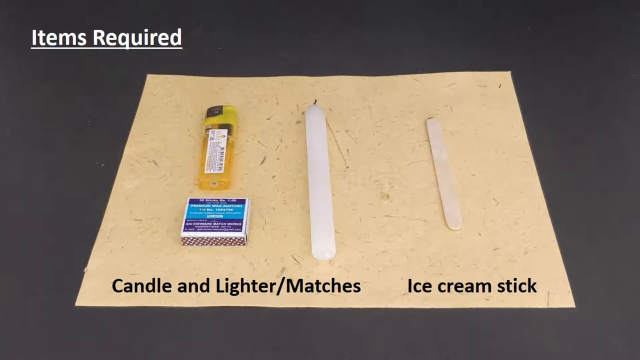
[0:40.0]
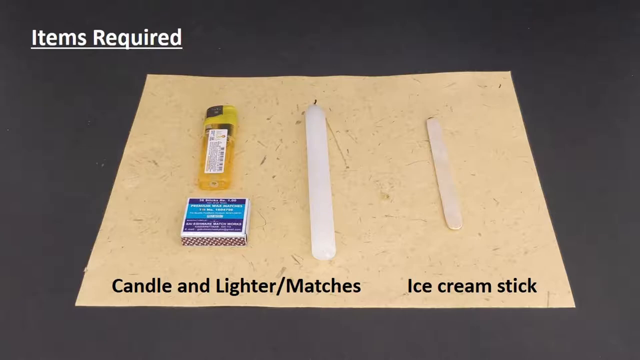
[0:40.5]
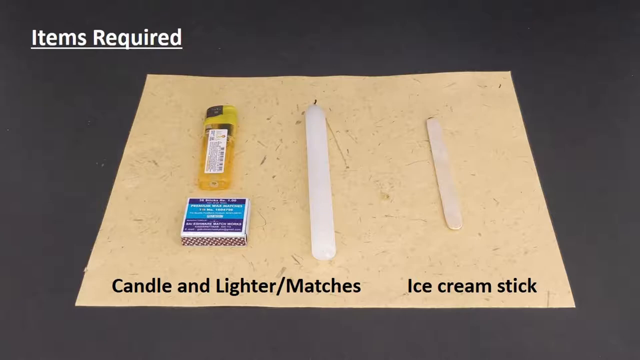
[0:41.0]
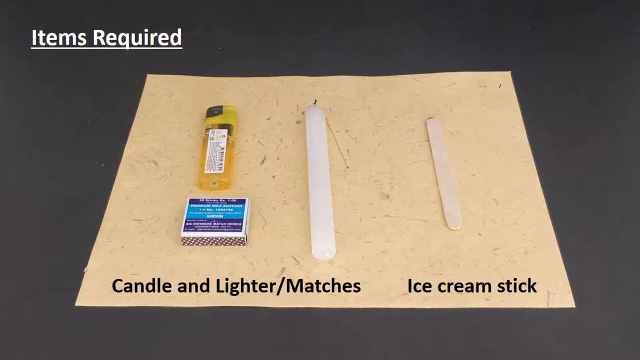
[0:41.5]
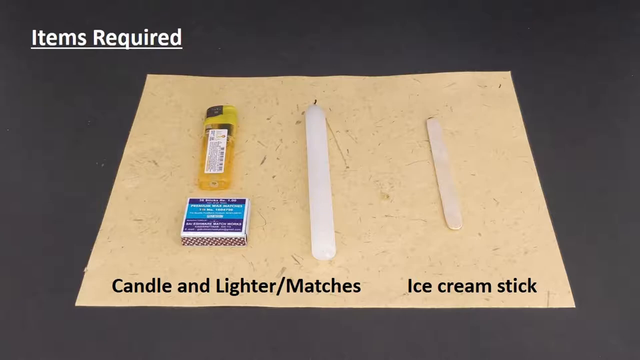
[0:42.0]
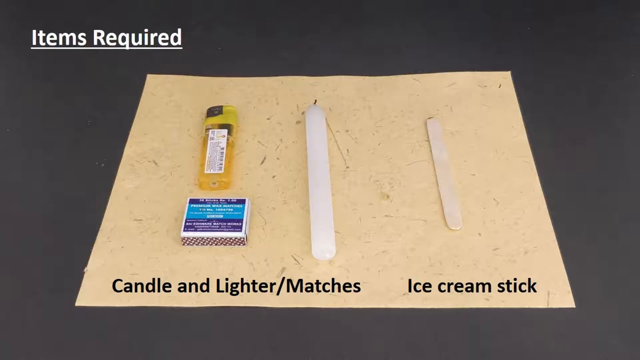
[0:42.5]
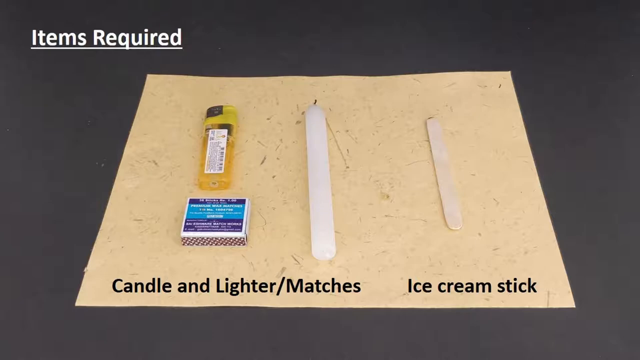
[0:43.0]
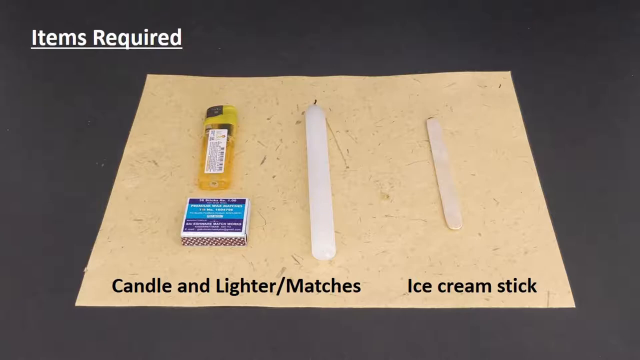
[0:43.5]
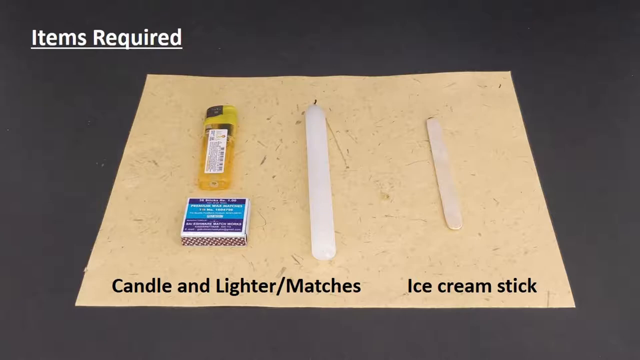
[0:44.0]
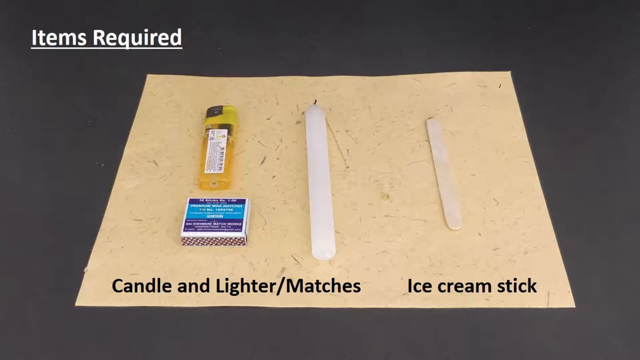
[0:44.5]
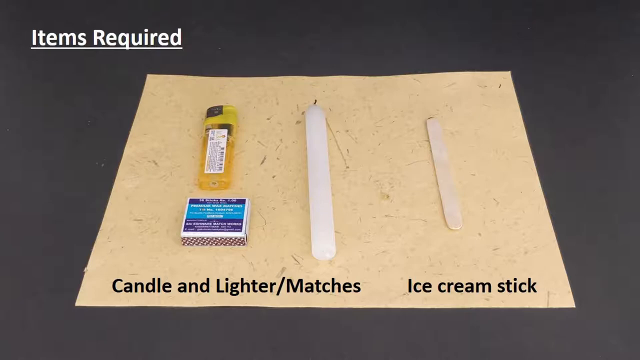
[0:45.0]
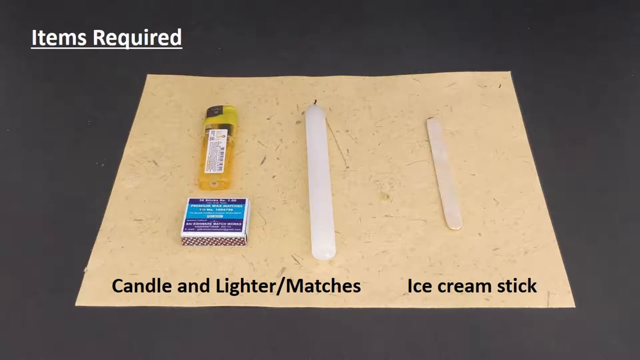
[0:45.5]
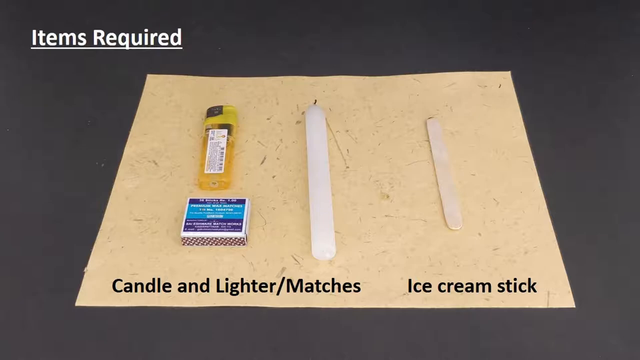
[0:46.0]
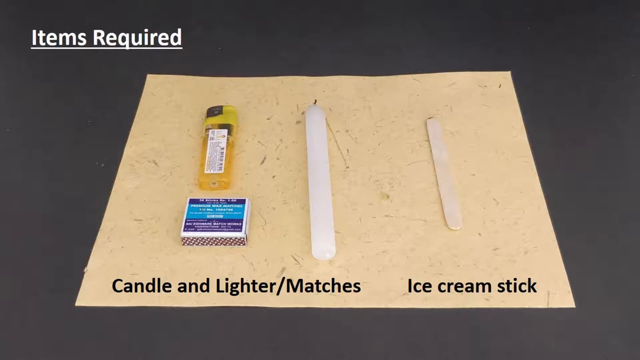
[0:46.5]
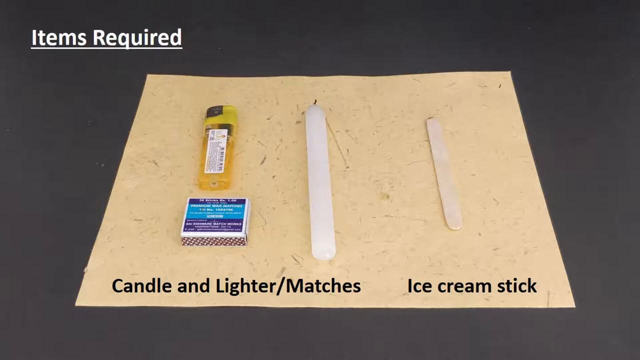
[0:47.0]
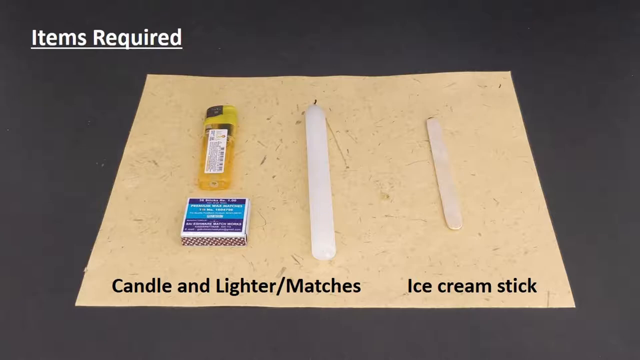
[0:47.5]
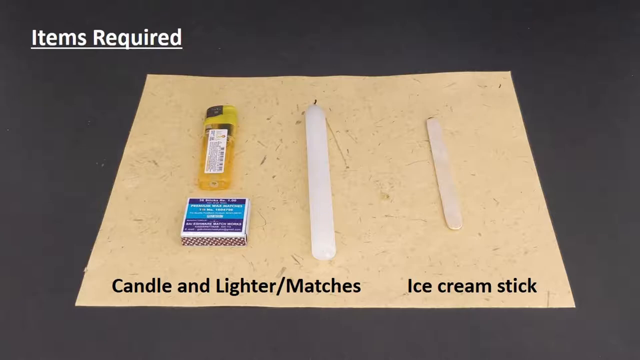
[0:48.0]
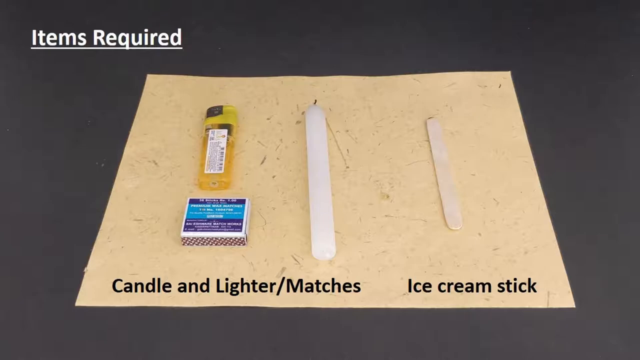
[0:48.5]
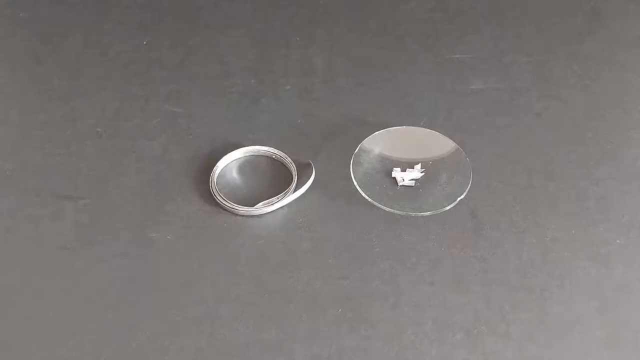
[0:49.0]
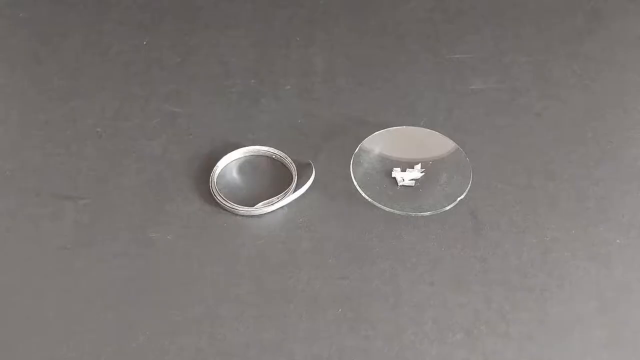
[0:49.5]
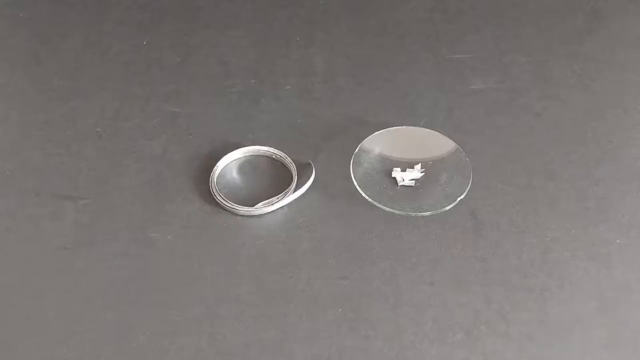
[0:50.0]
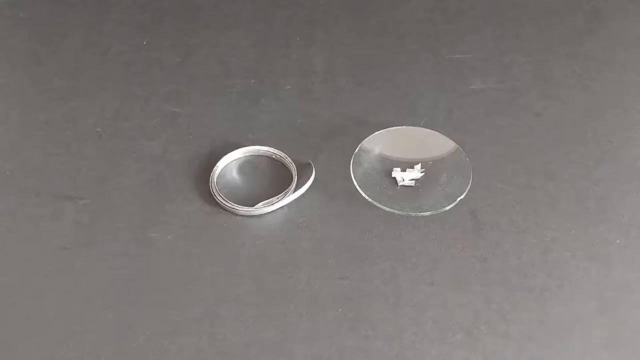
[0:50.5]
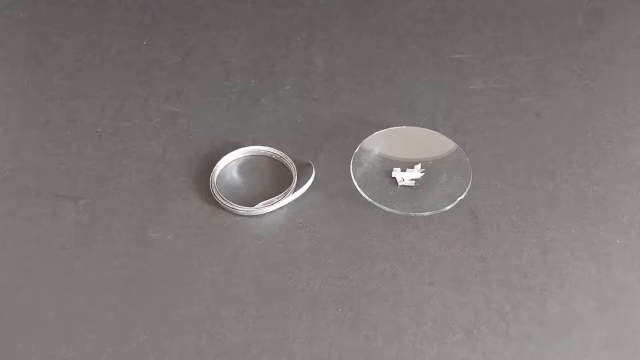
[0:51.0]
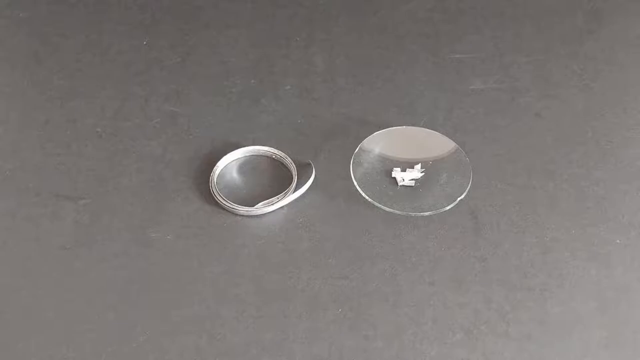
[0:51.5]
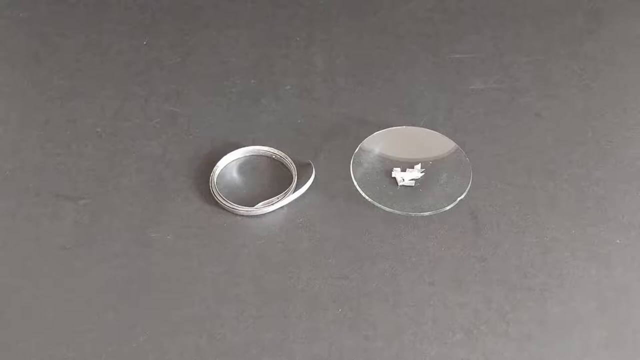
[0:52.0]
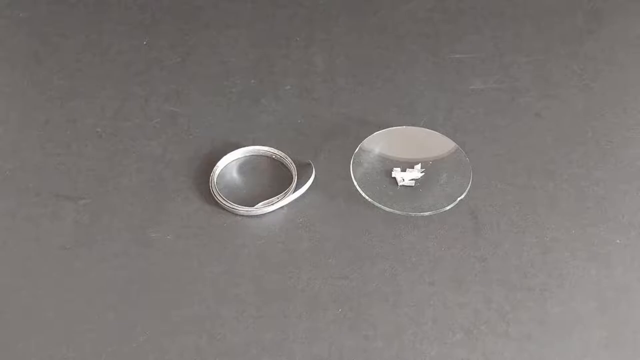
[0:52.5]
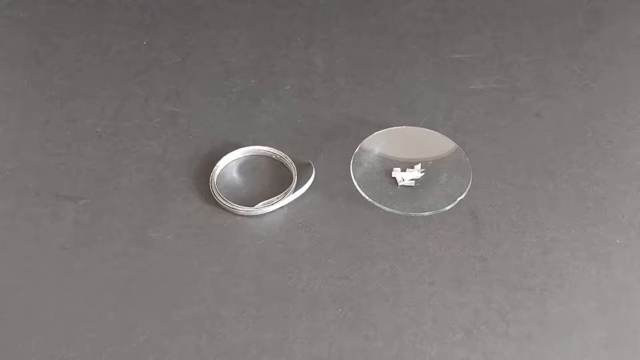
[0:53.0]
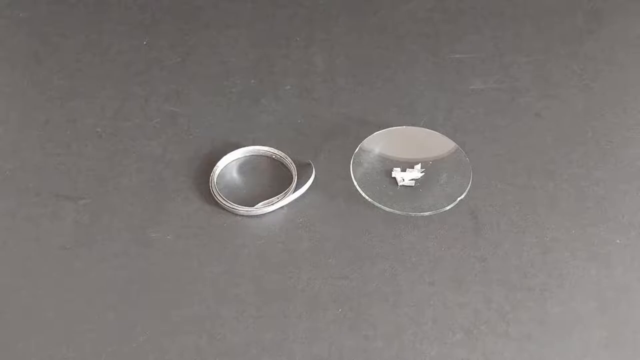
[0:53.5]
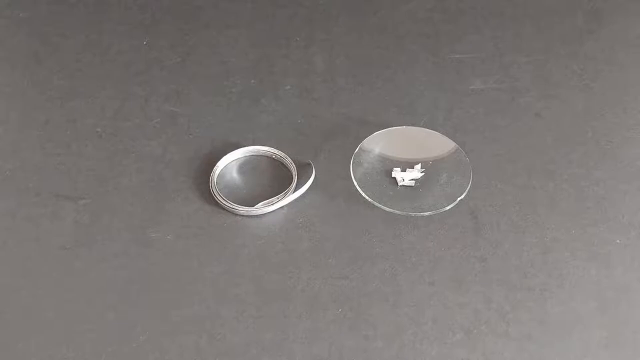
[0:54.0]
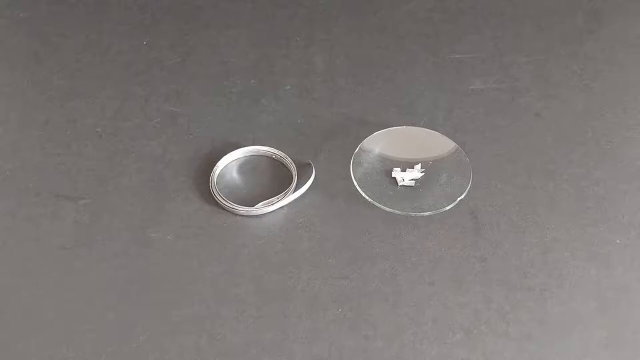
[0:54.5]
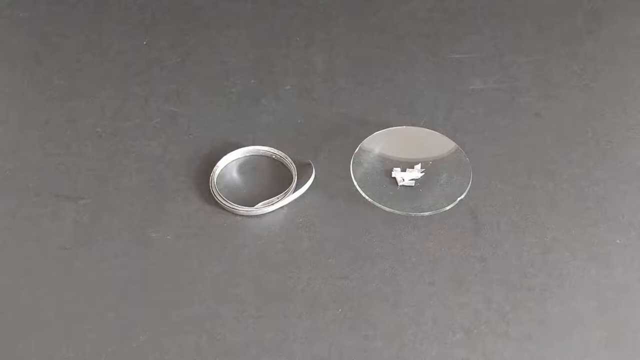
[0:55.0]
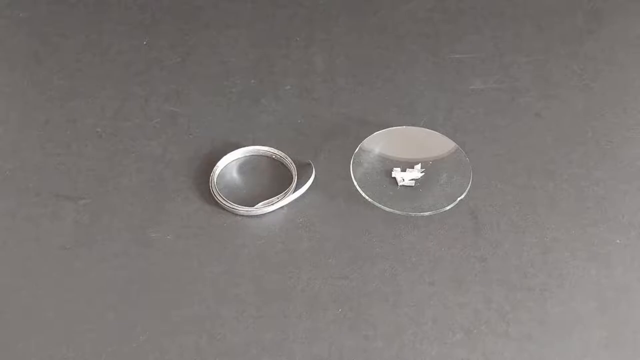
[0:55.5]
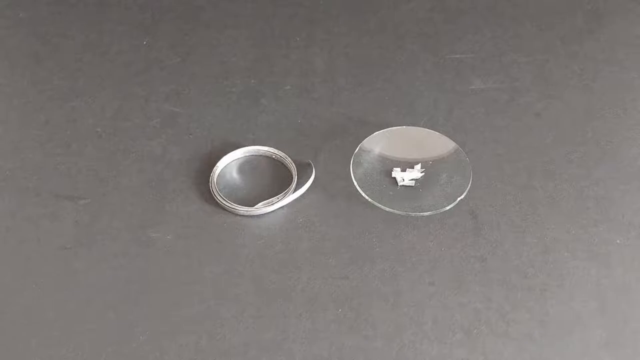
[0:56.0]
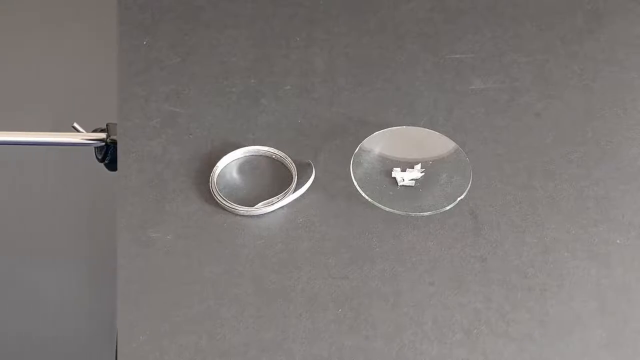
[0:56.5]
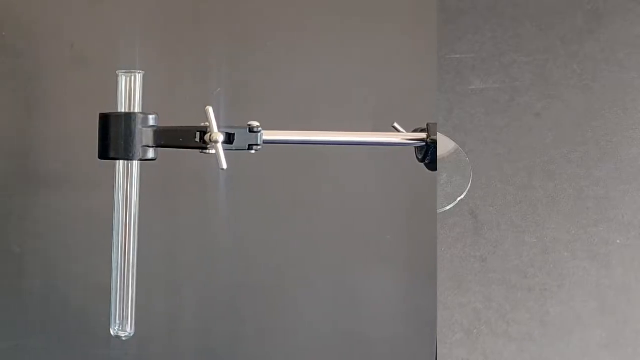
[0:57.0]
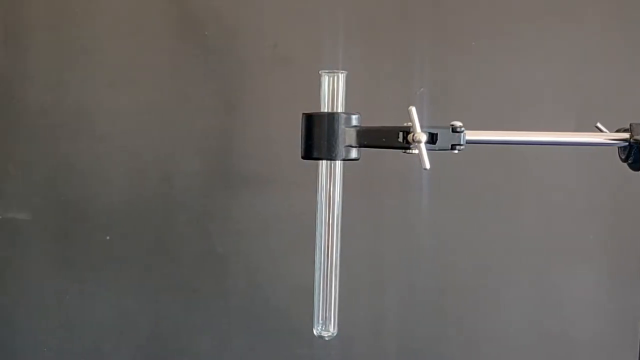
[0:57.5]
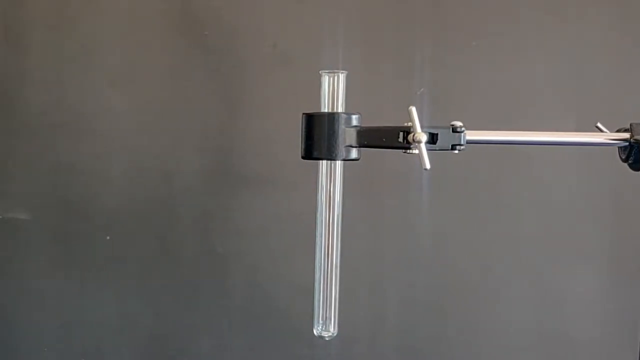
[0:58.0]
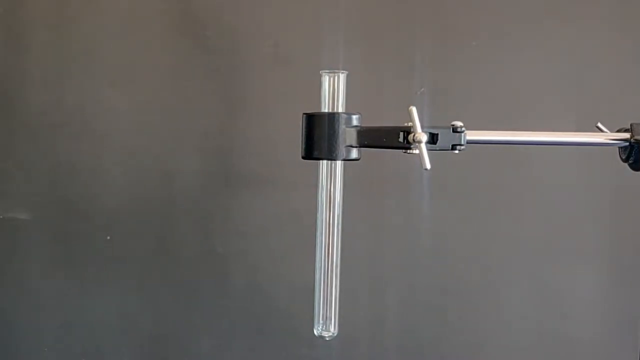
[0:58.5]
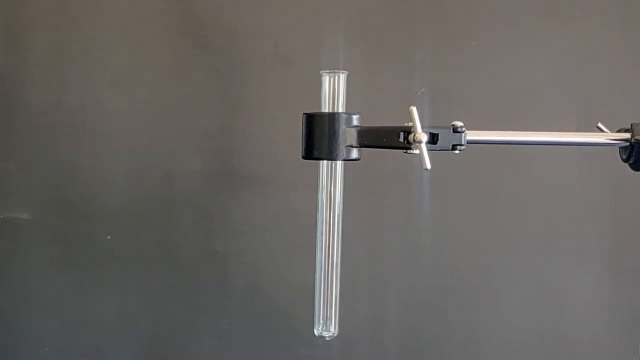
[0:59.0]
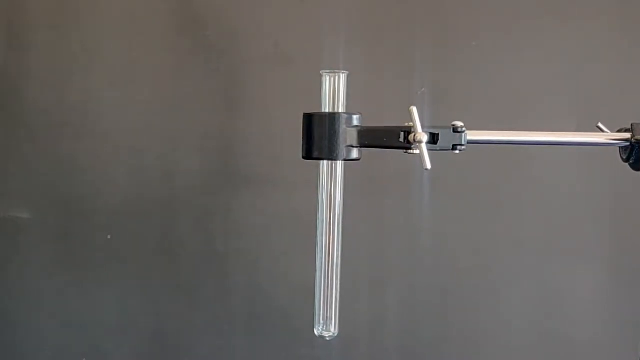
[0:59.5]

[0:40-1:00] An overhead view shows a tabletop and a tan mat with items on it. Black text at the bottom of the mat identifies them: "candle and lighter," "matches," and "ice cream stick." In the top left corner of the screen is underlined white text reading "items required." The tabletop is dark gray. The video transitions to an overhead view of a silver tabletop with two items. The one on the left looks like a roll of silver; the one on the right is a concave piece of glass with some slivers of something in its middle, hard to identify, possibly clippings from the roll of silver. The video then transitions to a mechanical arm on a stainless steel pole, with hinges for movement and a tightening bar, extending to the right.